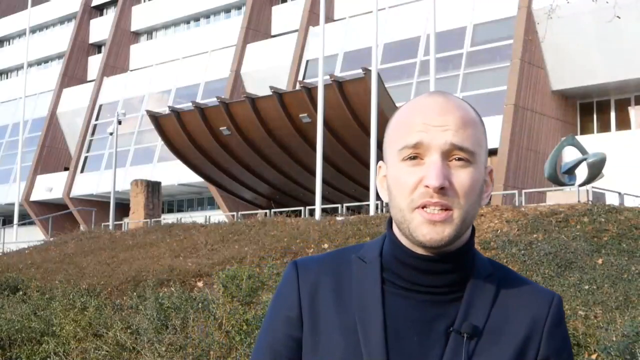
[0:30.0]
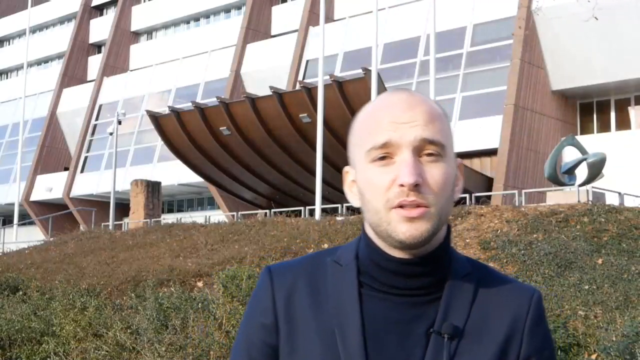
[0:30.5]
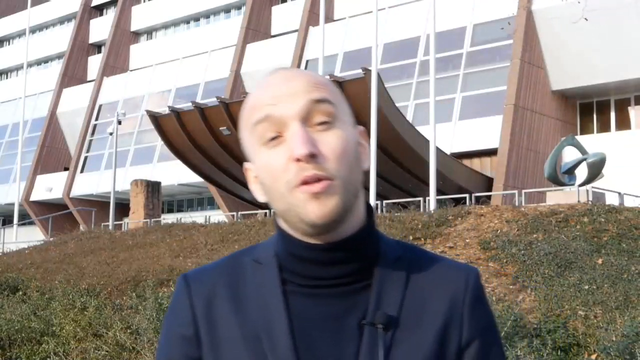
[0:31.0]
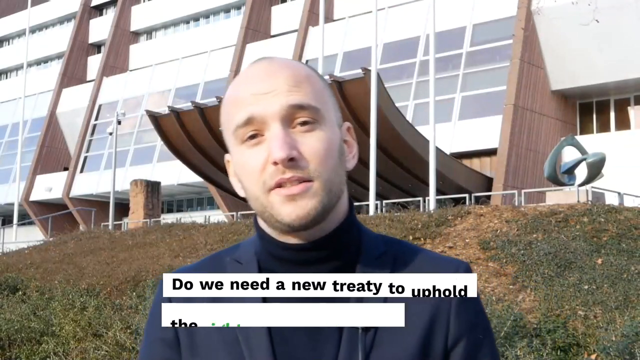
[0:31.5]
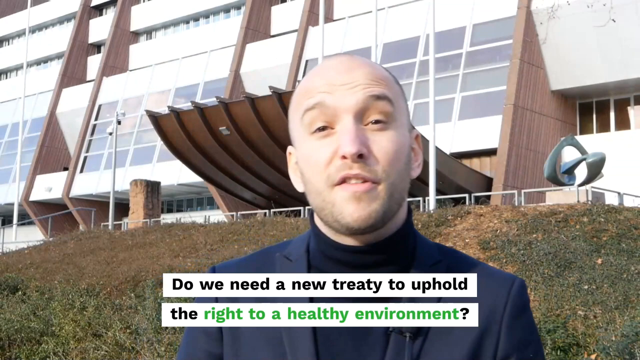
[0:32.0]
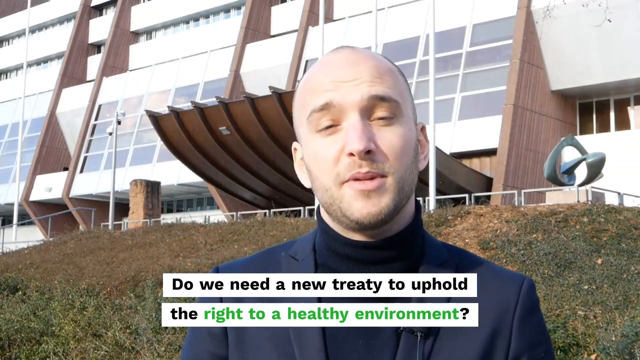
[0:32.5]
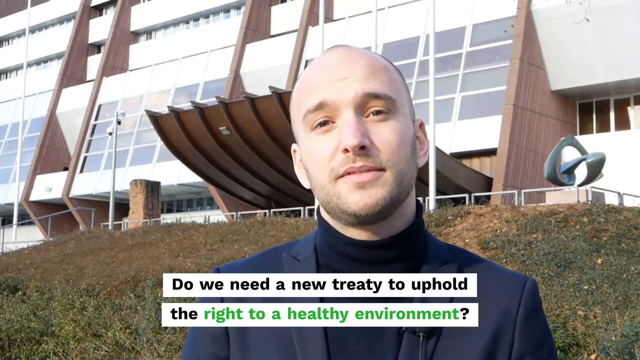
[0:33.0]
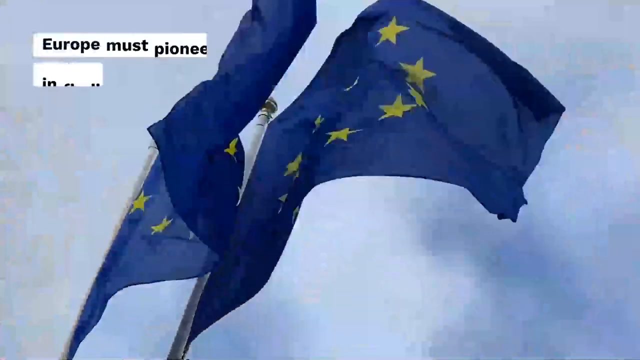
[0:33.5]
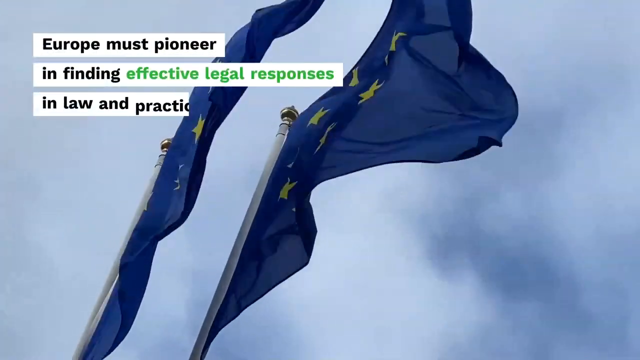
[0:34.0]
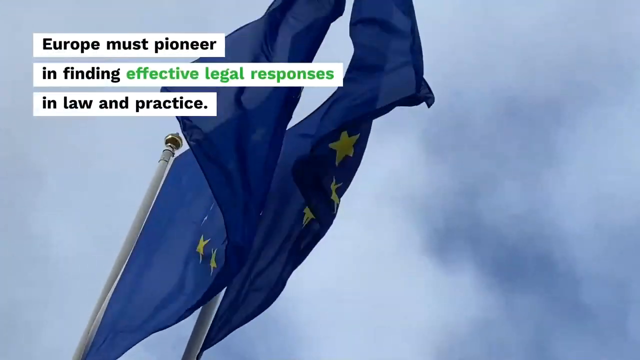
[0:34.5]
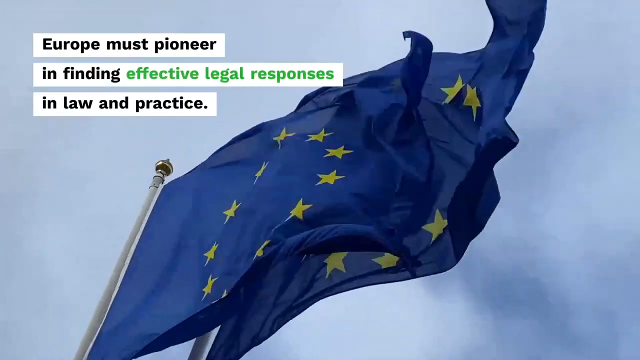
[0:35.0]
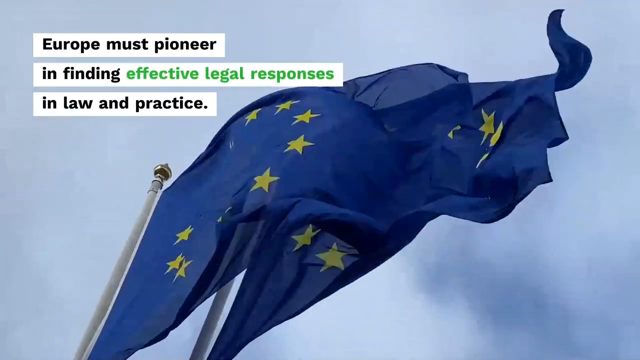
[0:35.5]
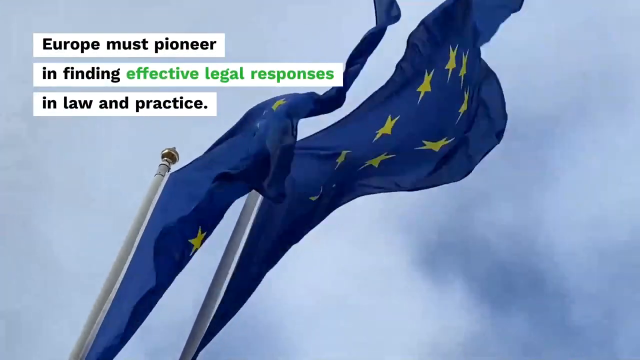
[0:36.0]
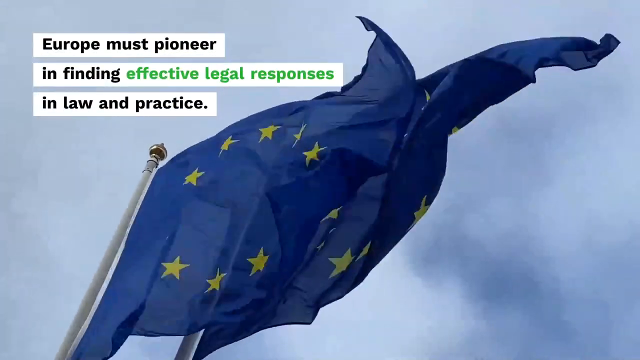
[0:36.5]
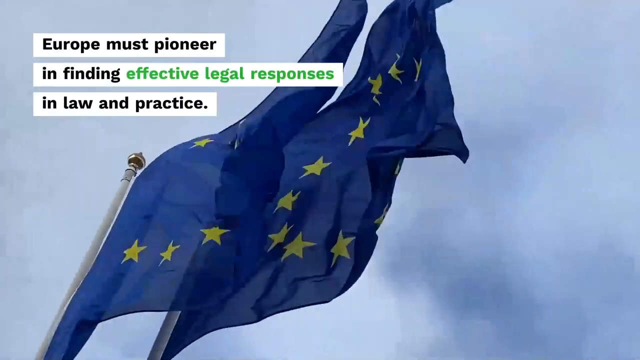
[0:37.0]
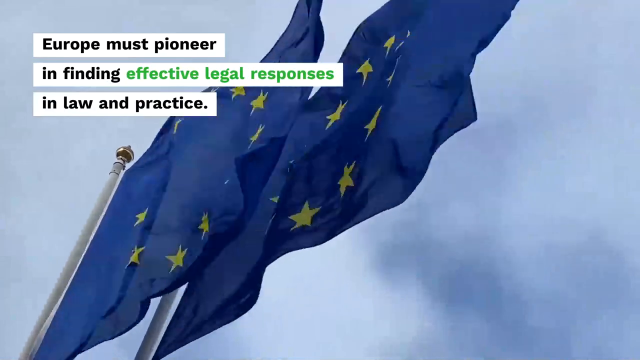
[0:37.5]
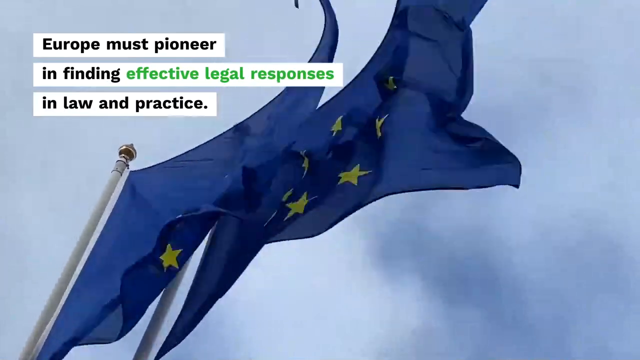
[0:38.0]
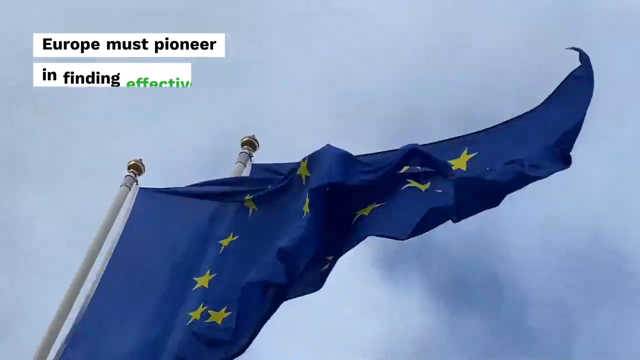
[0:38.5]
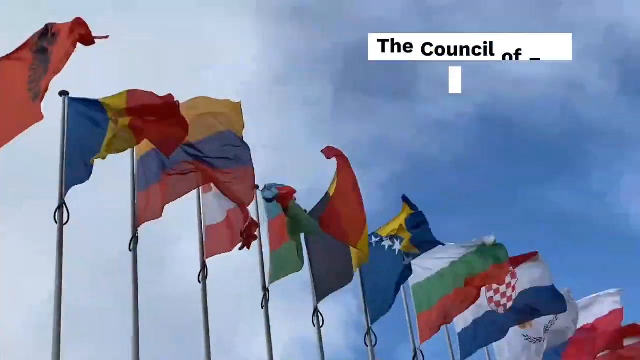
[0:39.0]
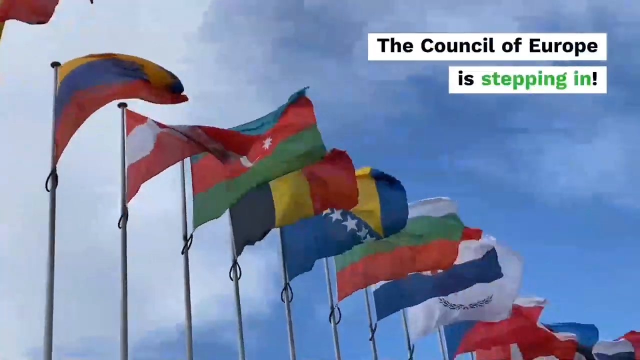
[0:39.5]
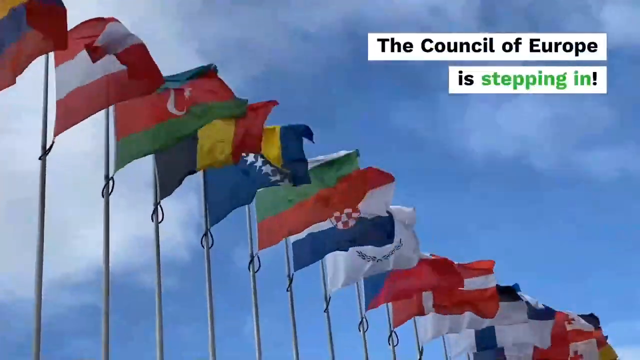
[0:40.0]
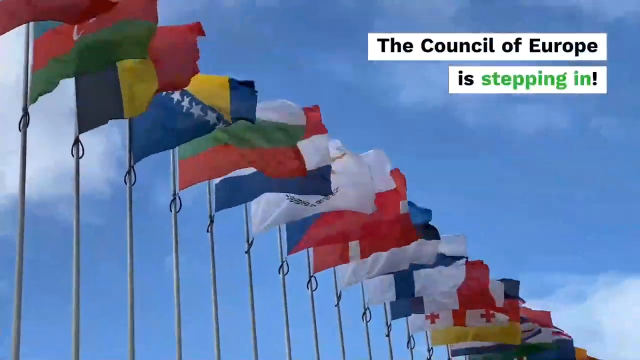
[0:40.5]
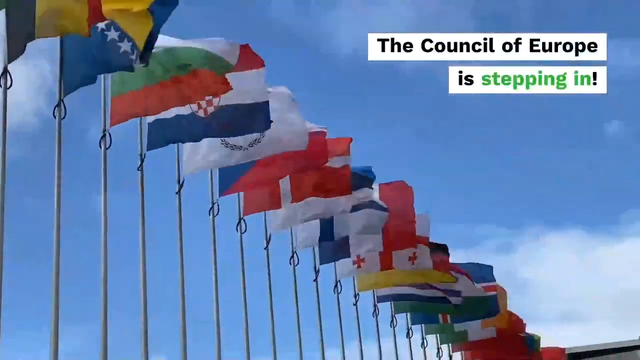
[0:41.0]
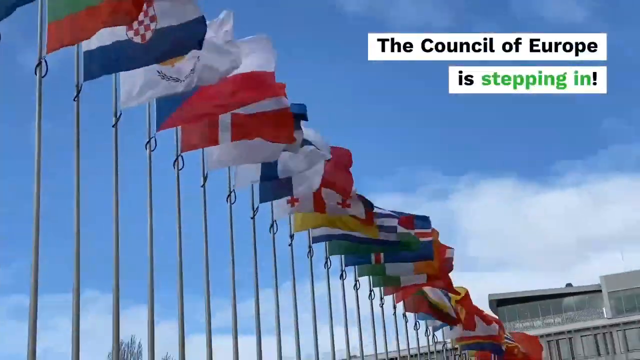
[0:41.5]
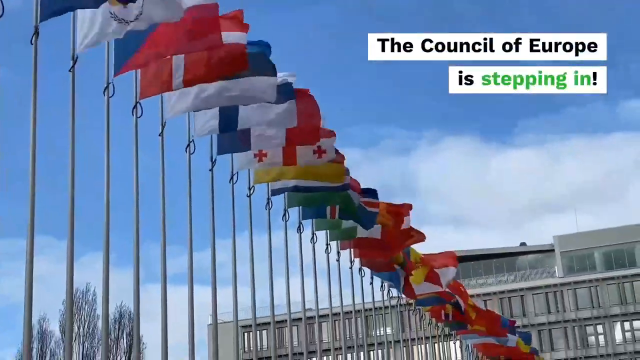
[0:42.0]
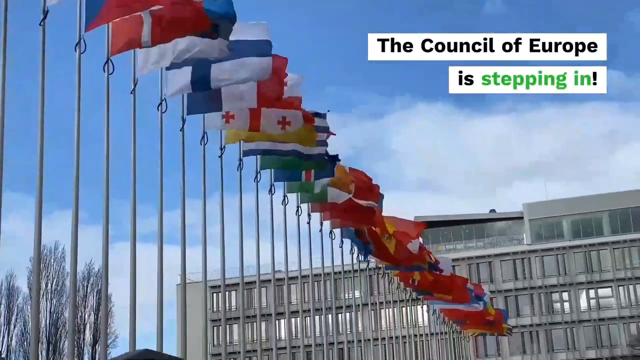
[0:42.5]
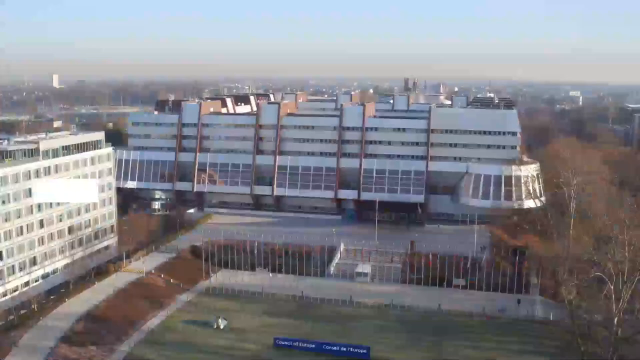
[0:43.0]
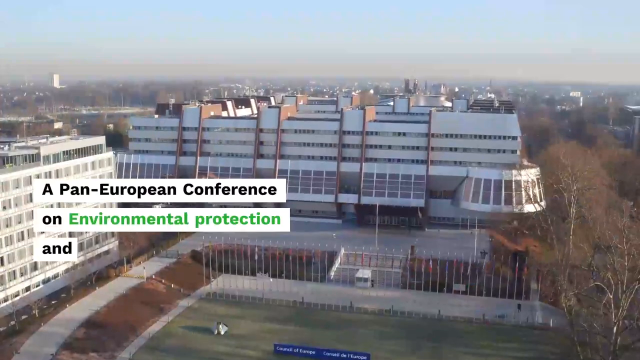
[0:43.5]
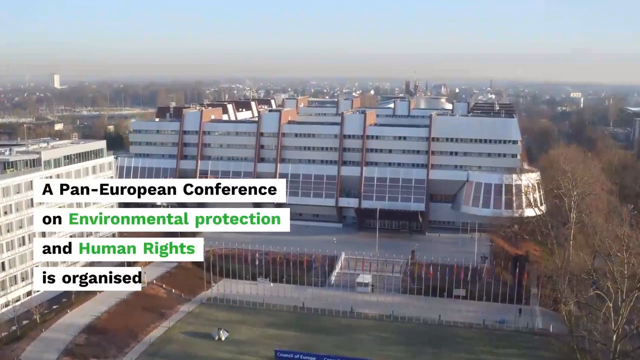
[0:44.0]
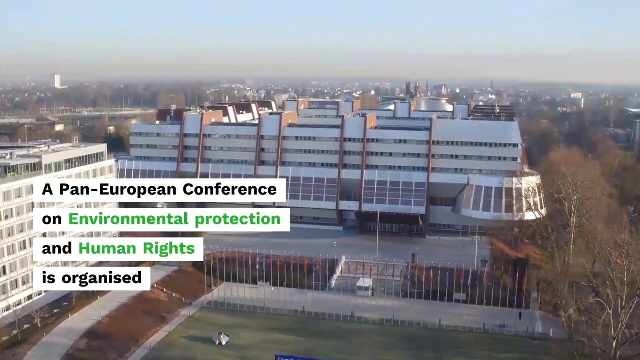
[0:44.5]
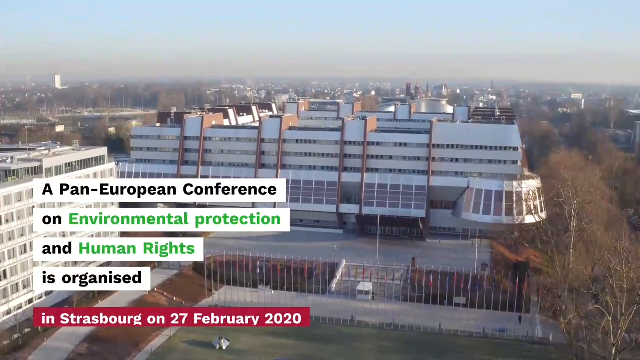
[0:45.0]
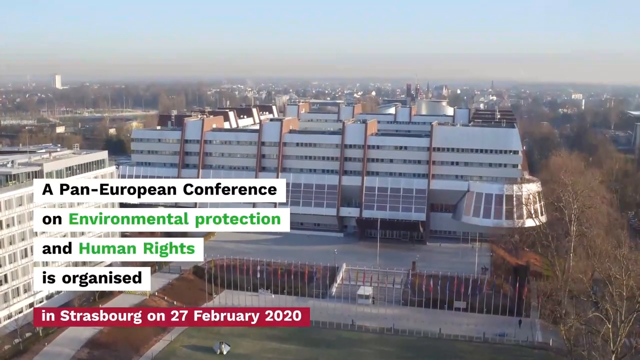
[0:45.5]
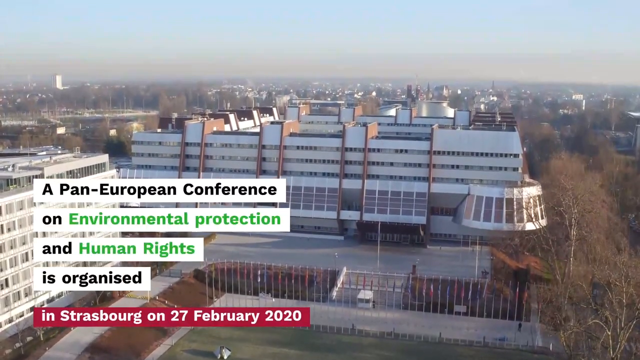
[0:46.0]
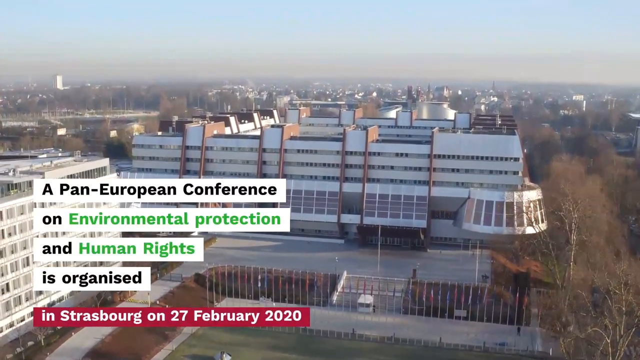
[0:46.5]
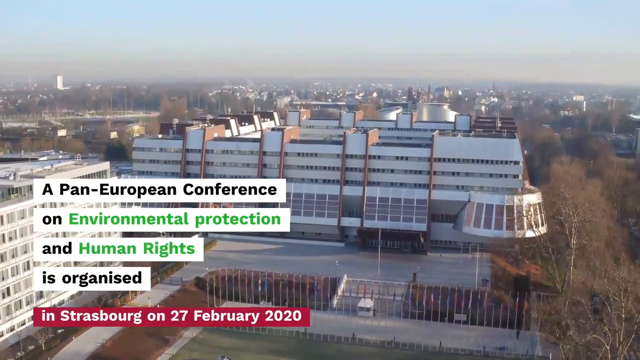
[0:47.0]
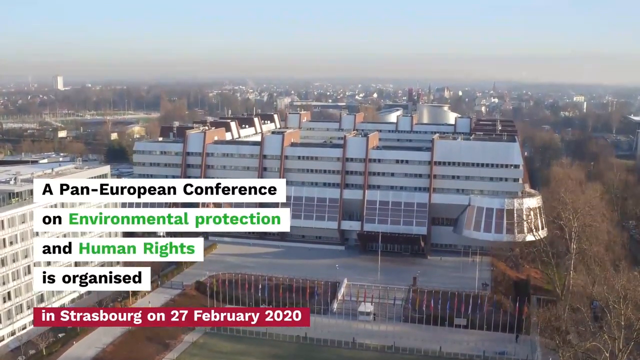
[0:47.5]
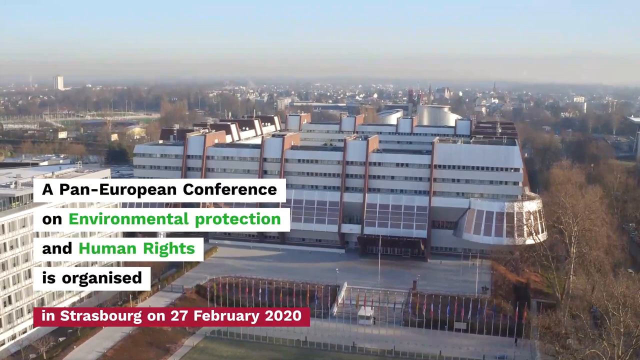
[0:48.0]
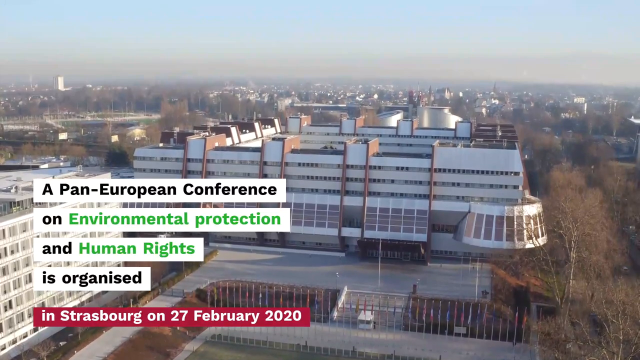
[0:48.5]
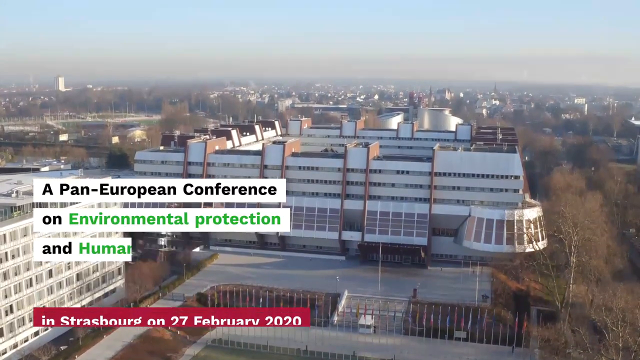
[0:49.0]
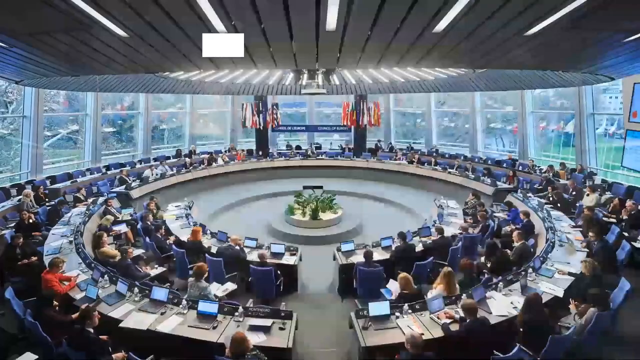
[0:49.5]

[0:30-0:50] A man wearing a full neck and a jacket is speaking, with a white building and some dry grass behind him. Text asks "do we need a new treaty to uphold the right to a healthy environment?" A flag is shown being waved by the air, with text reading "Europe must pioneer in finding effective legal responses in law and practice". Many flags then appear, with text in the upper right reading "the Council of Europe is stepping in", and a building on the far end. In the next scene, text reads "a Pan-European Conference on Environmental Protection and Human Rights is organized". Several buildings are on the far end, along with a dry forest, apparently due to climate change, and the sky is not clear. The video is dated 27th February 2020.